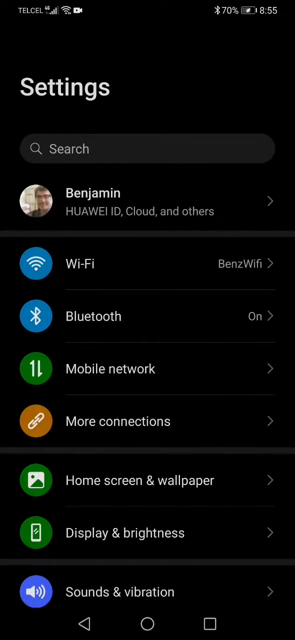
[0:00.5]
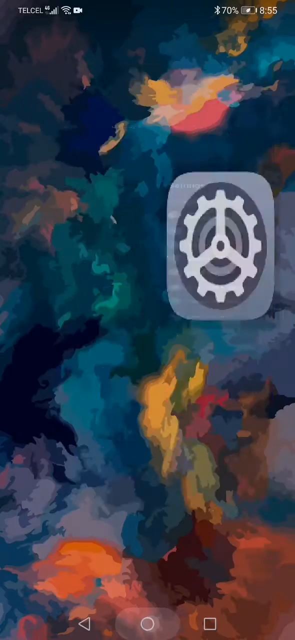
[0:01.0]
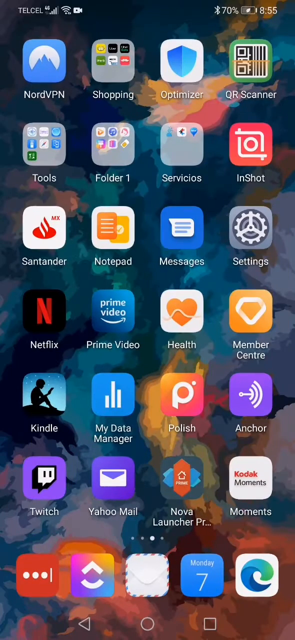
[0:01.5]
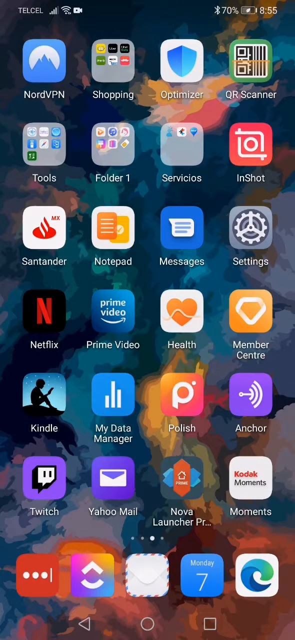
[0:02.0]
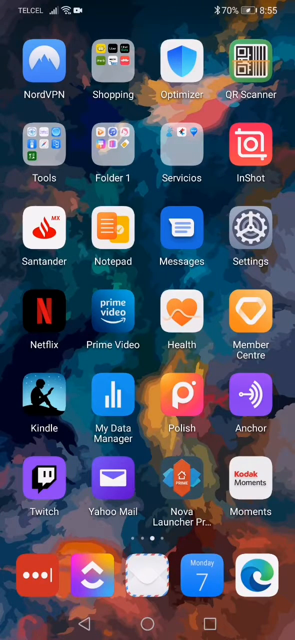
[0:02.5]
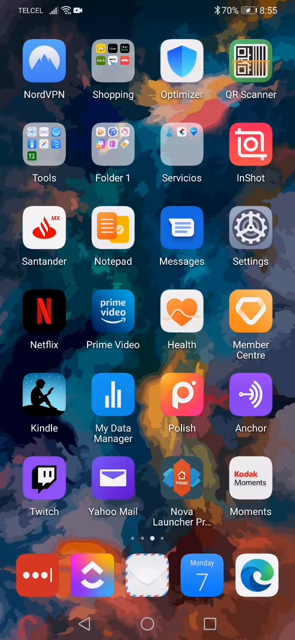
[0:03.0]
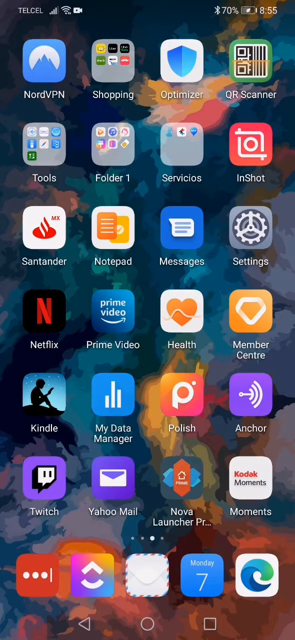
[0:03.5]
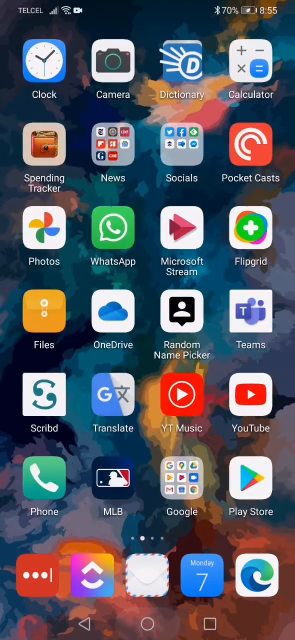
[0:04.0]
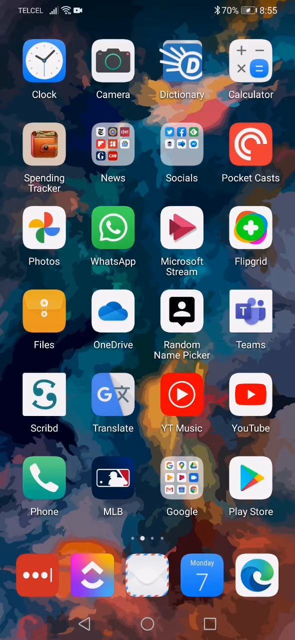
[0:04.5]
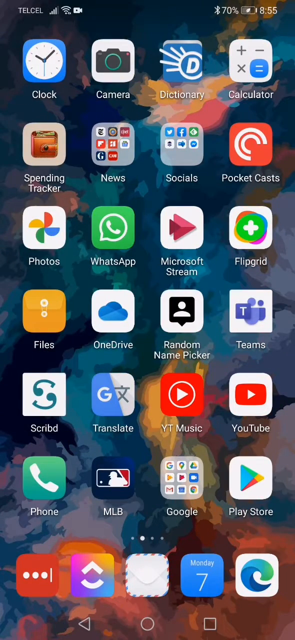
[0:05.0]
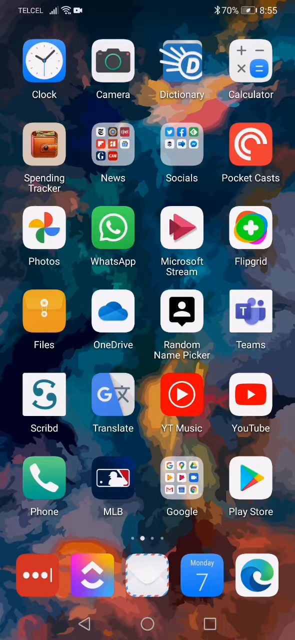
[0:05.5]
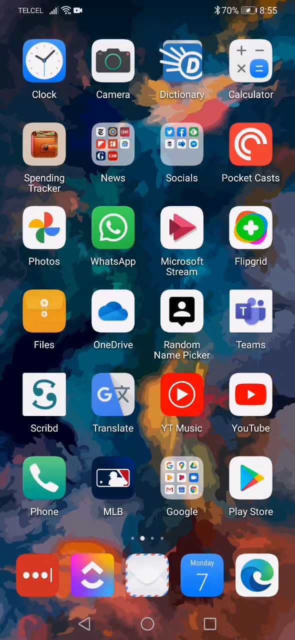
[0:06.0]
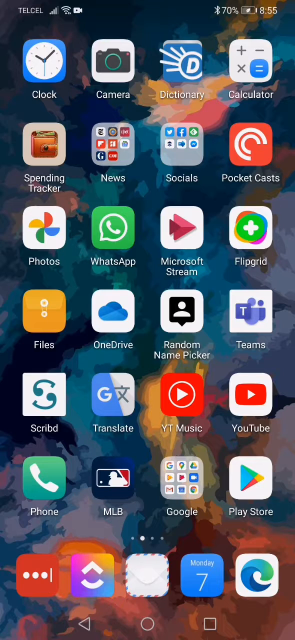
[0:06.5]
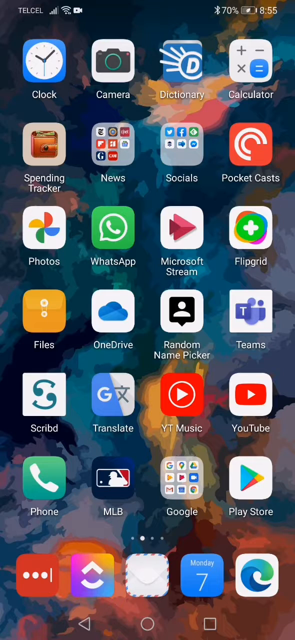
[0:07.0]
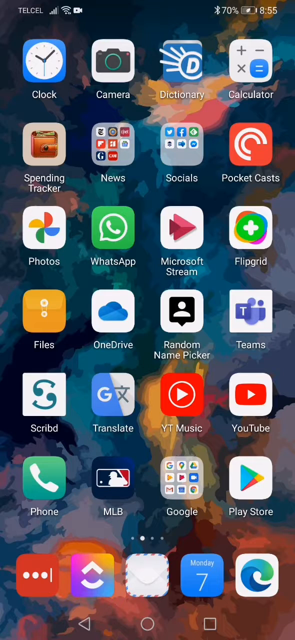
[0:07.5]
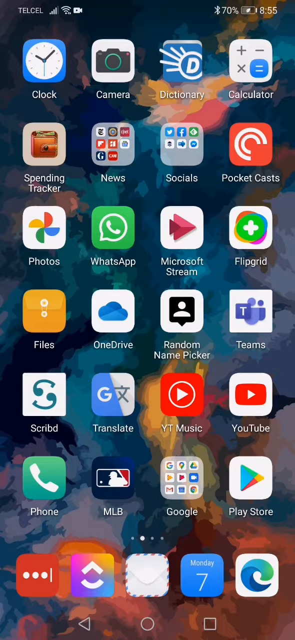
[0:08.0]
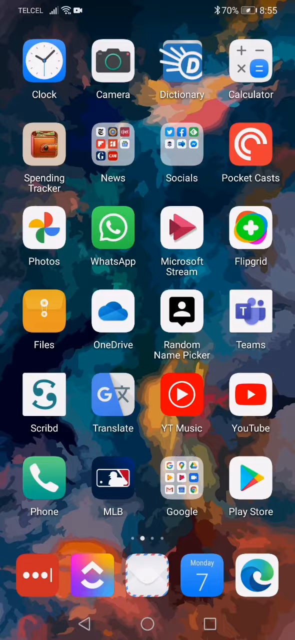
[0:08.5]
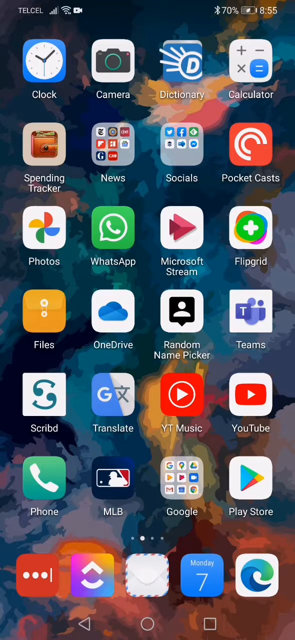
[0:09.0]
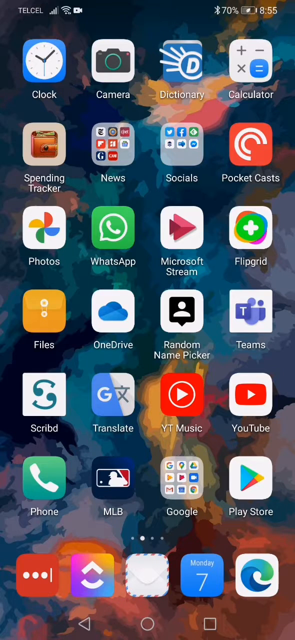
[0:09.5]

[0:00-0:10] A phone screen that seems quite long displays home settings and a page of apps: Google Translate, Play Store, YouTube, YouTube Kids, connections, a clock, a dictionary, a camera, a calculator, and a socials group containing Facebook, Twitter and Instagram, plus what appears to be photos. The screen changes from one page to another. The apps are laid out seven by five, making 35 on one page.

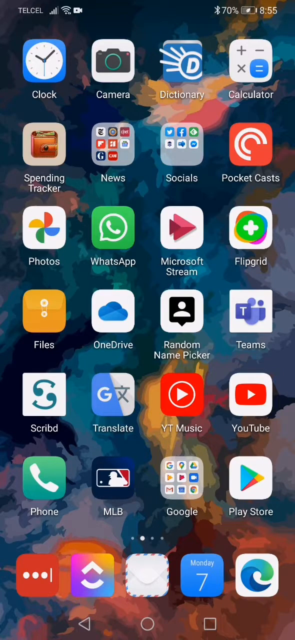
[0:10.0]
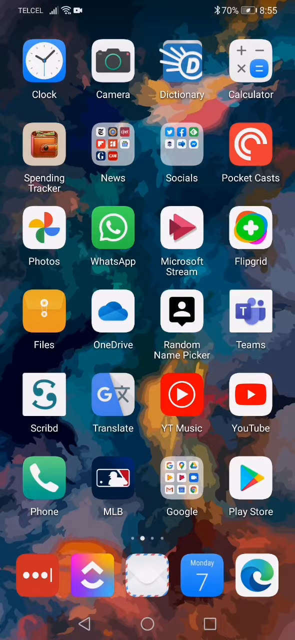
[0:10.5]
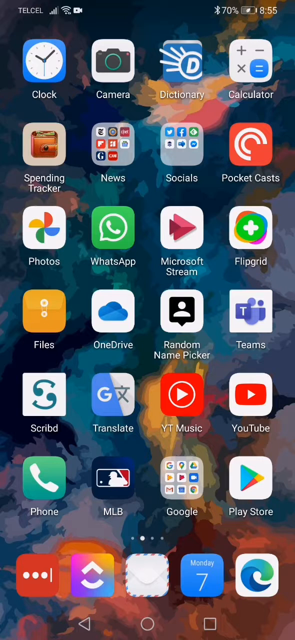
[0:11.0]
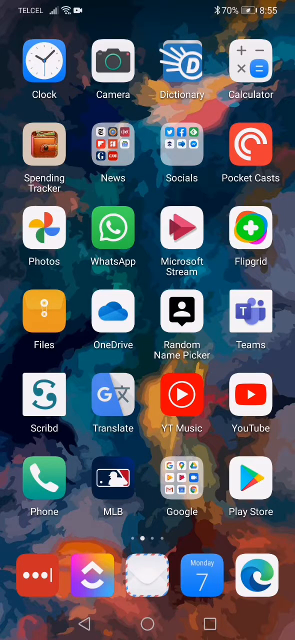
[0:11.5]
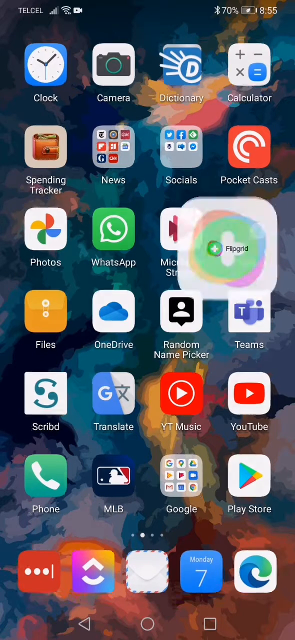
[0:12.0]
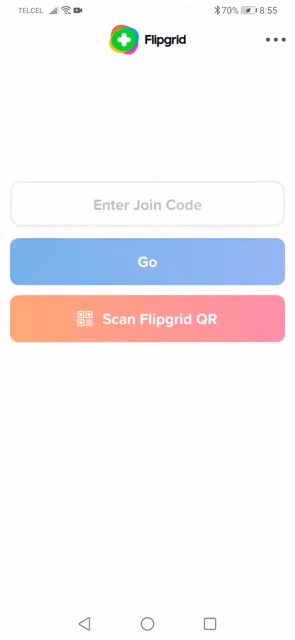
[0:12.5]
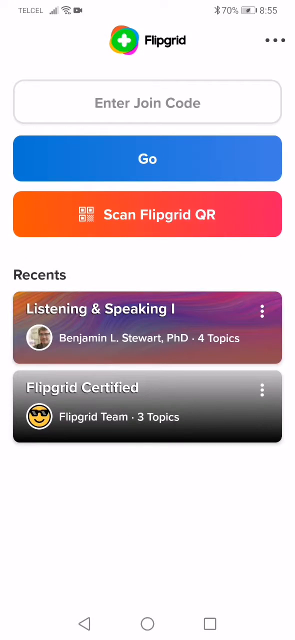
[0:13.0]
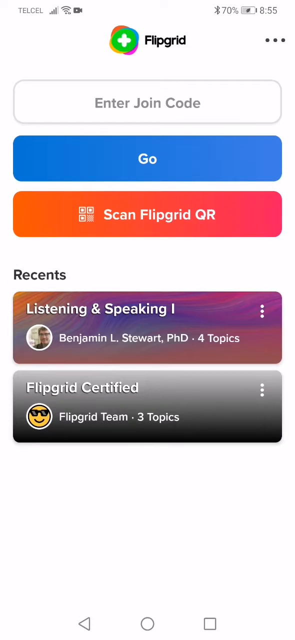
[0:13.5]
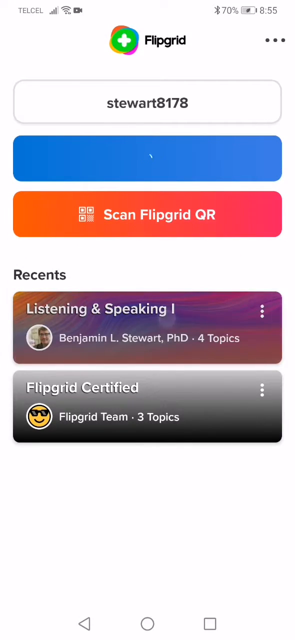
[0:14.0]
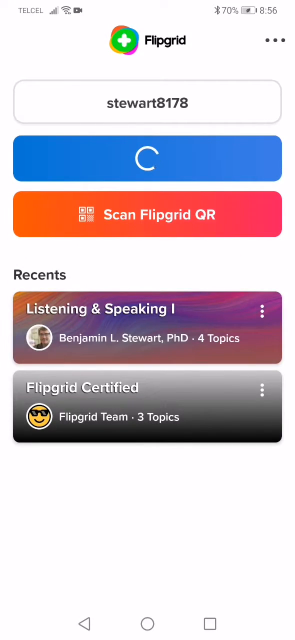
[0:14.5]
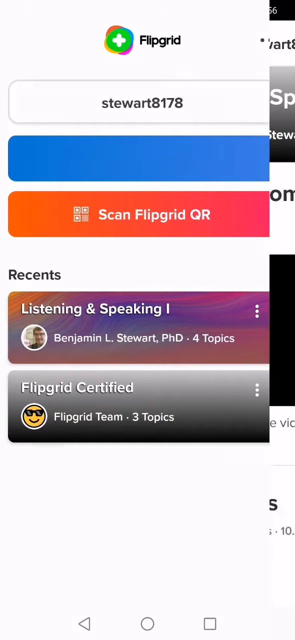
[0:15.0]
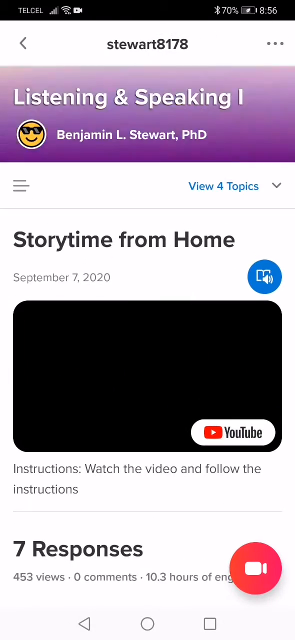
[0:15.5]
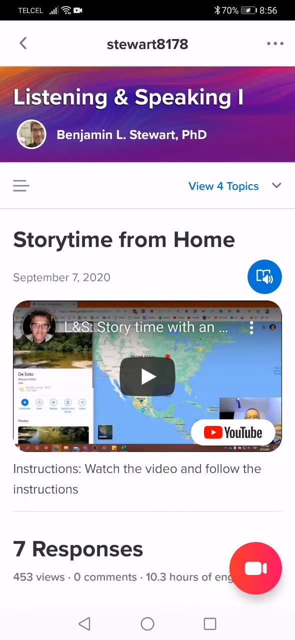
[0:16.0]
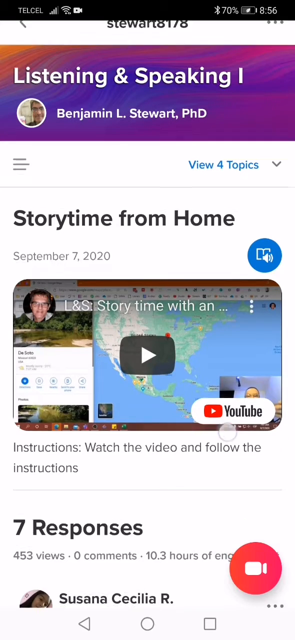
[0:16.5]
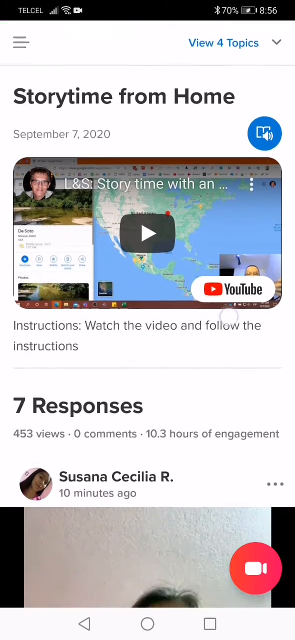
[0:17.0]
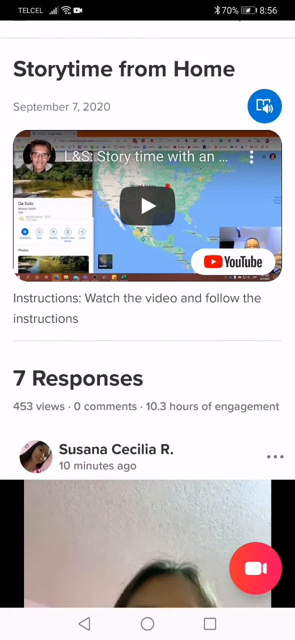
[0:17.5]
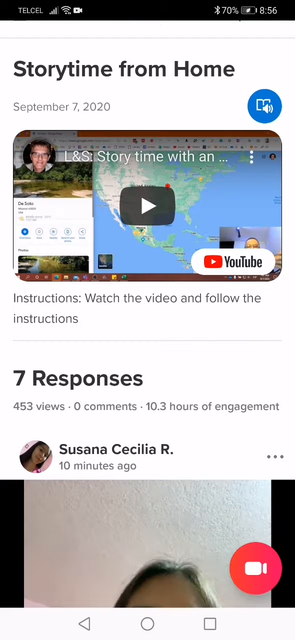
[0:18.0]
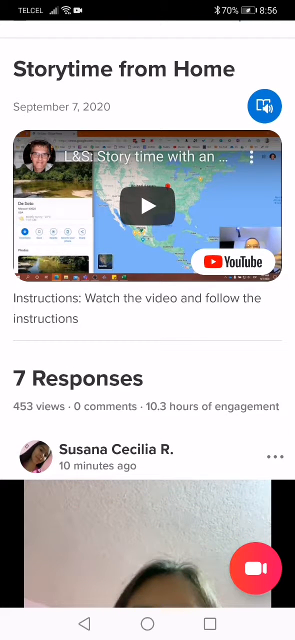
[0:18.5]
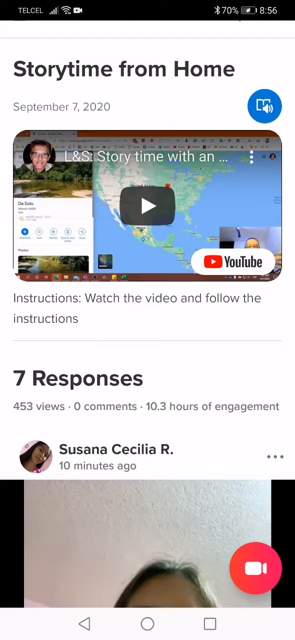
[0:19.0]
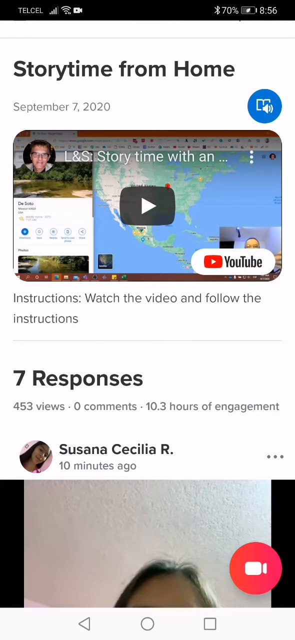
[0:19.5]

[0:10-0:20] Microsoft Edge is opened, then YouTube, where a man's name is visible. "Flipgrid certified" appears, along with seven responses and 453 views; one response is from Susanna Cecilia R. "Story time from home" is shown with instructions on how to watch the videos. What looks like a weather forecast appears on YouTube. A figure of 10.3 hours of watching YouTube videos is shown, apparently within one day. The name Benjamin L. Stewart, a doctor, appears.